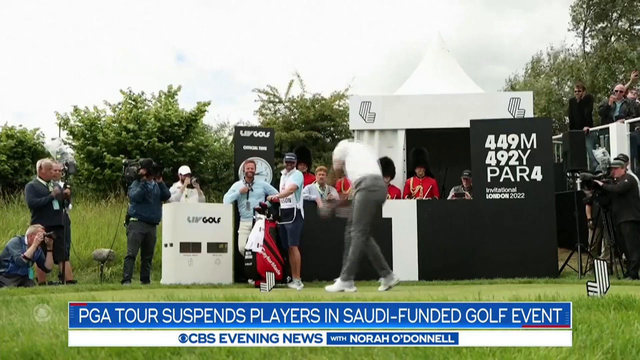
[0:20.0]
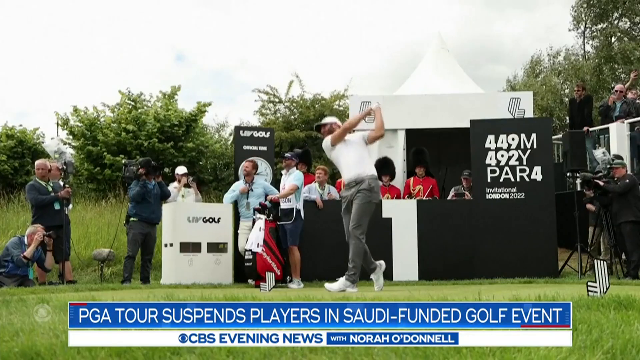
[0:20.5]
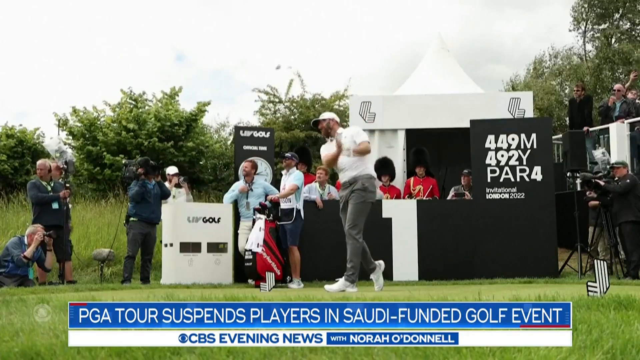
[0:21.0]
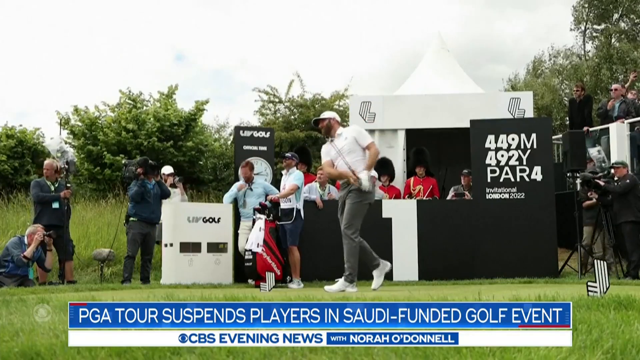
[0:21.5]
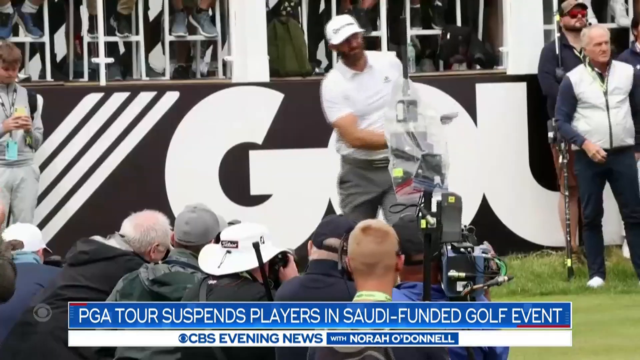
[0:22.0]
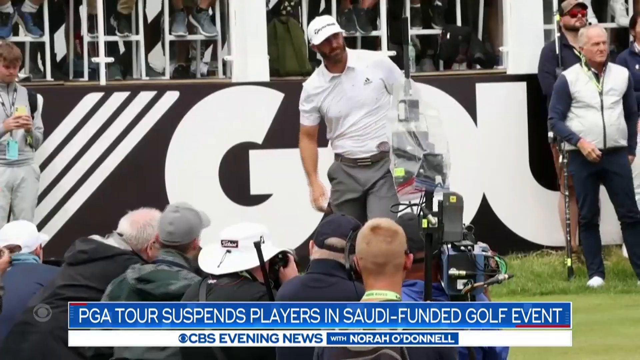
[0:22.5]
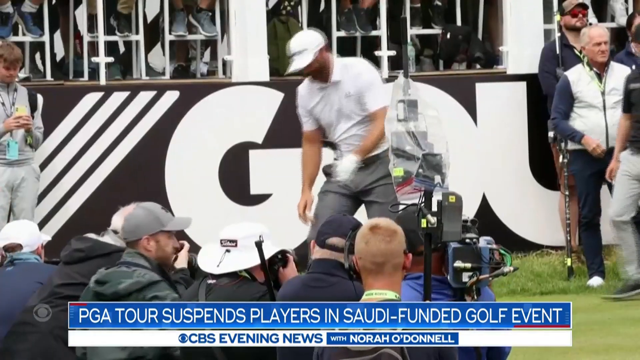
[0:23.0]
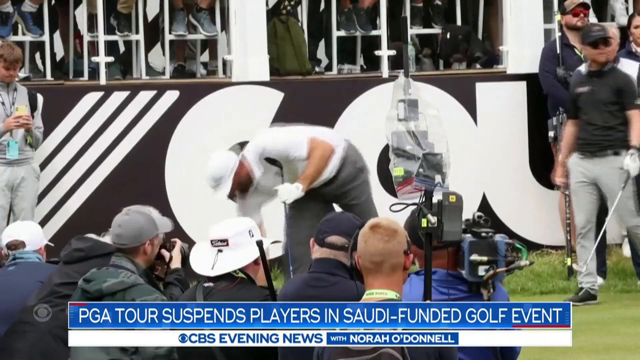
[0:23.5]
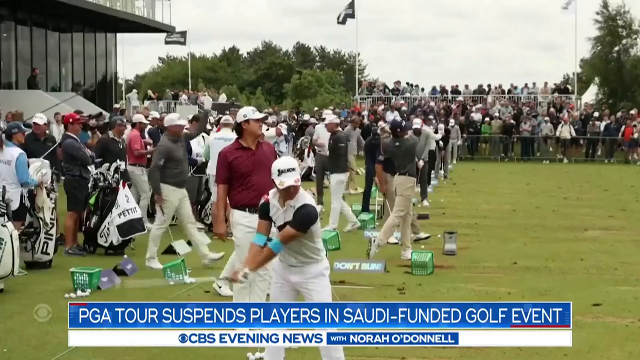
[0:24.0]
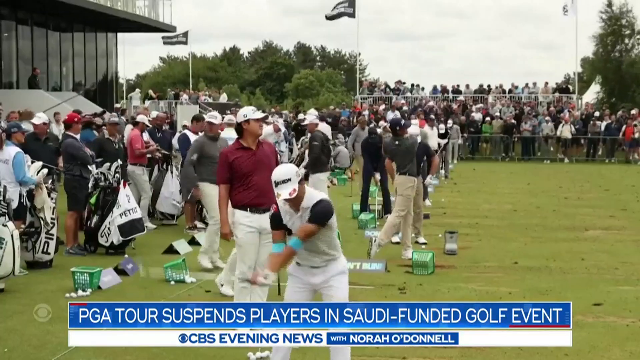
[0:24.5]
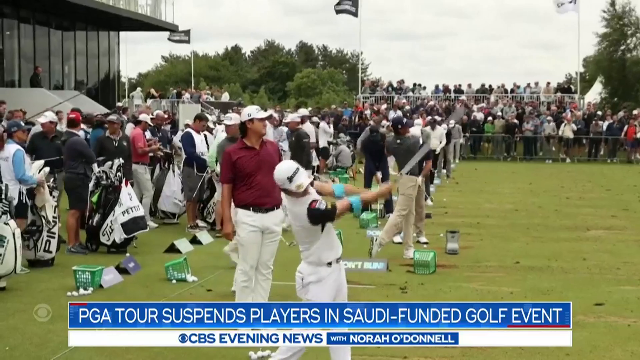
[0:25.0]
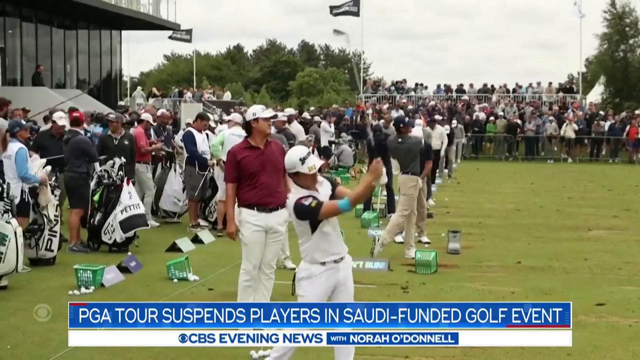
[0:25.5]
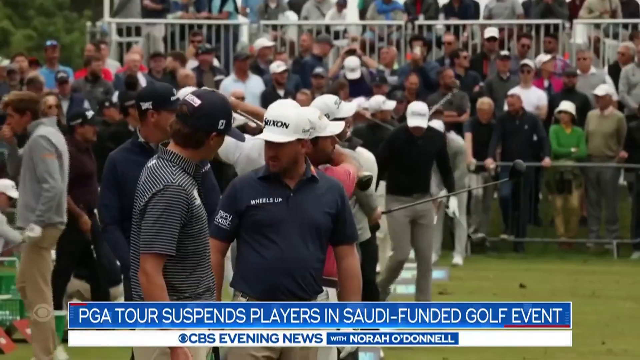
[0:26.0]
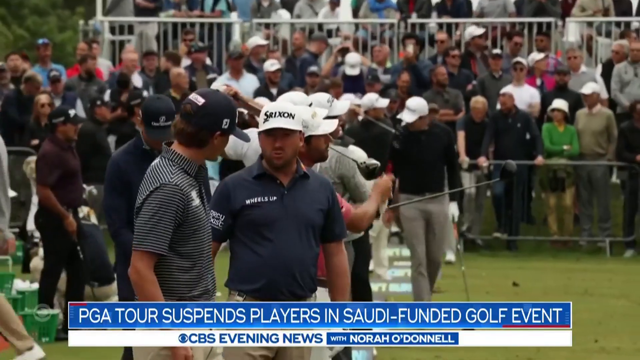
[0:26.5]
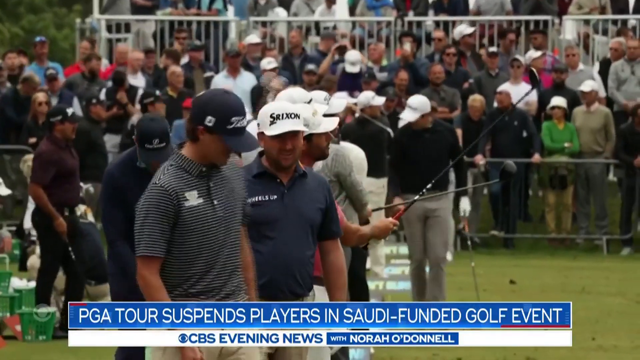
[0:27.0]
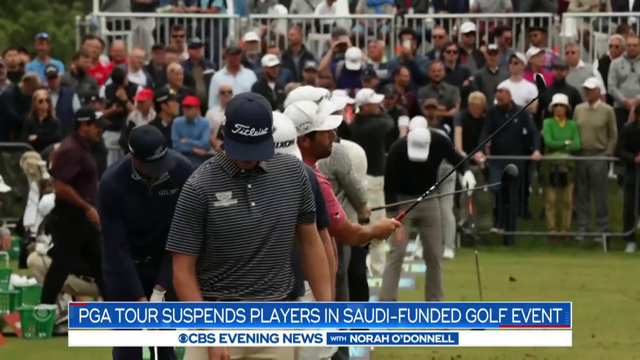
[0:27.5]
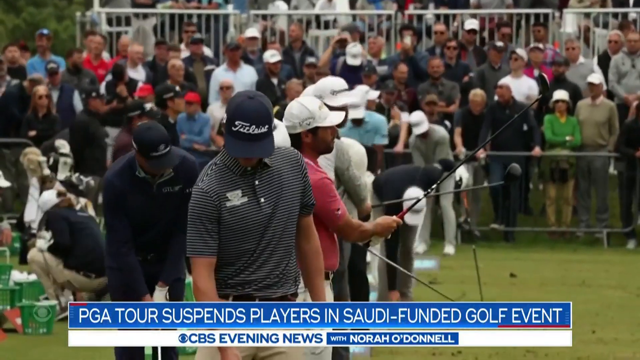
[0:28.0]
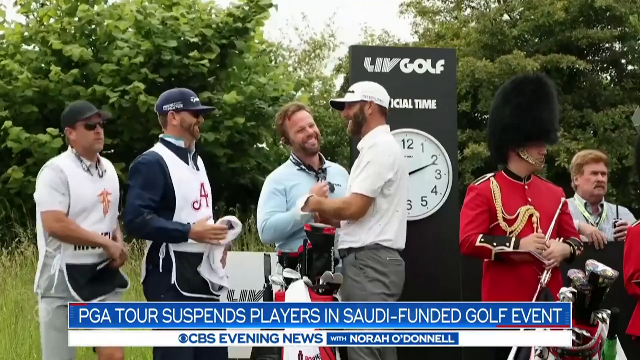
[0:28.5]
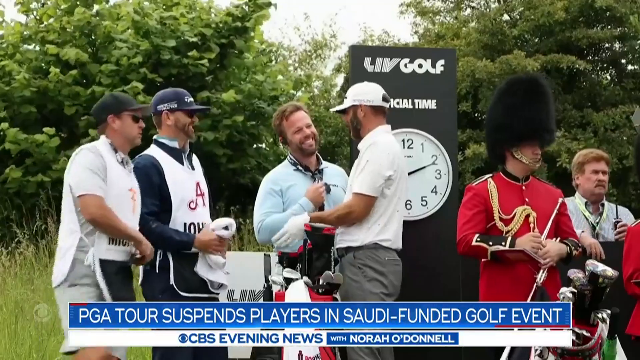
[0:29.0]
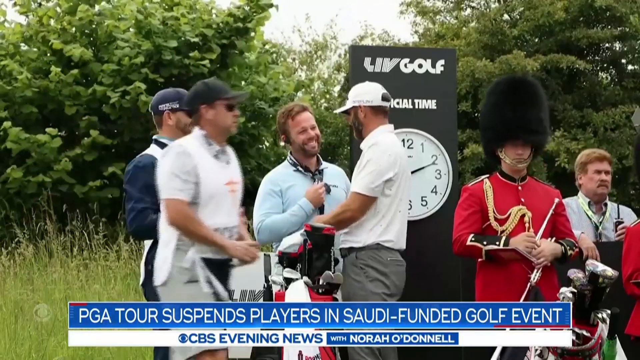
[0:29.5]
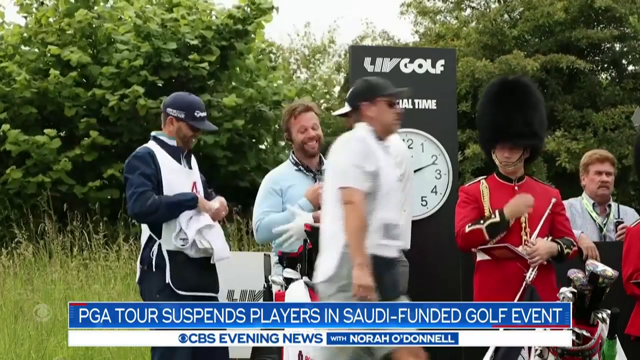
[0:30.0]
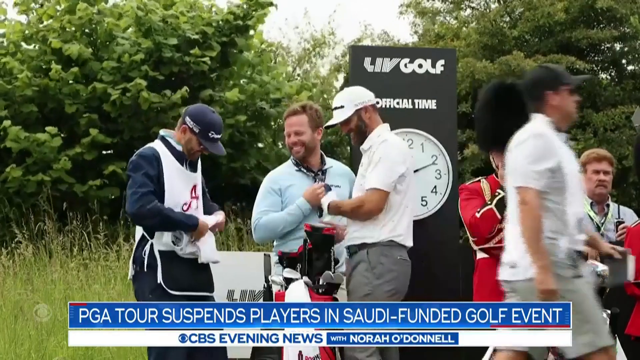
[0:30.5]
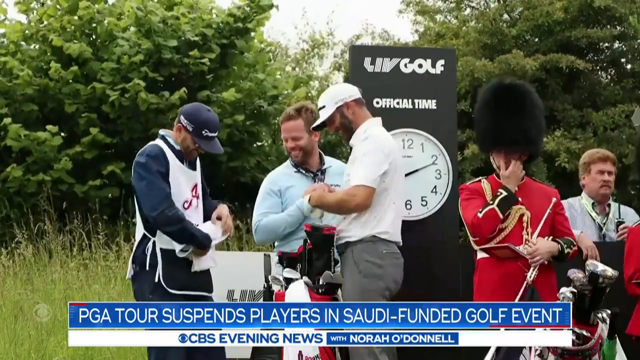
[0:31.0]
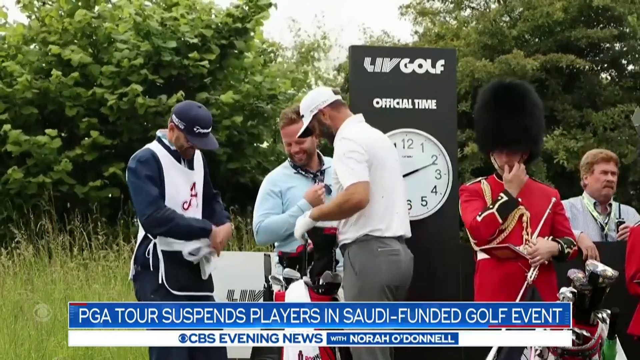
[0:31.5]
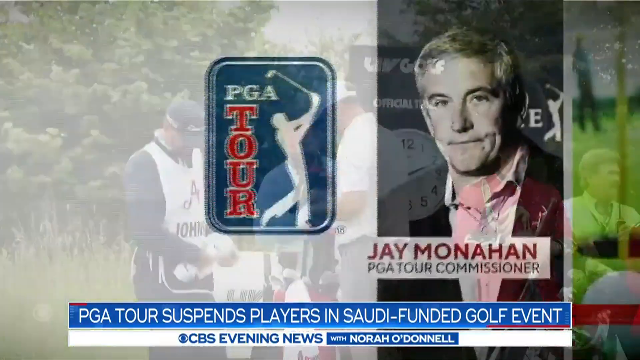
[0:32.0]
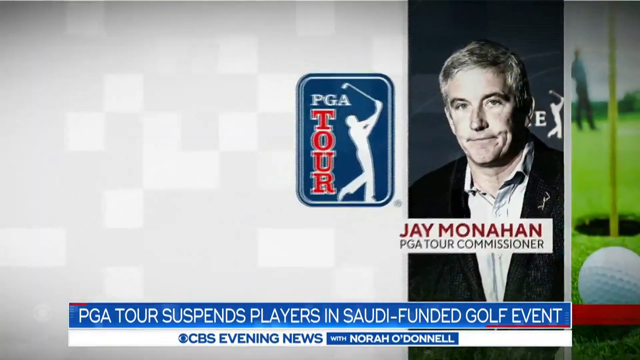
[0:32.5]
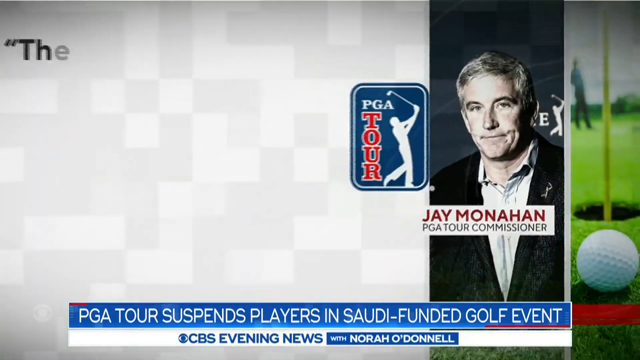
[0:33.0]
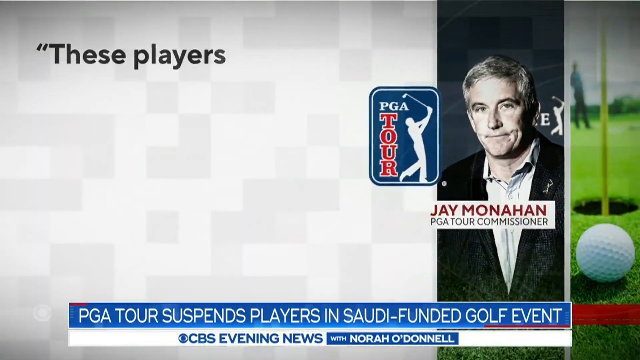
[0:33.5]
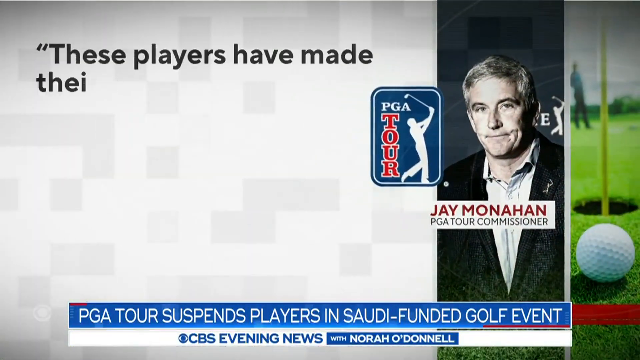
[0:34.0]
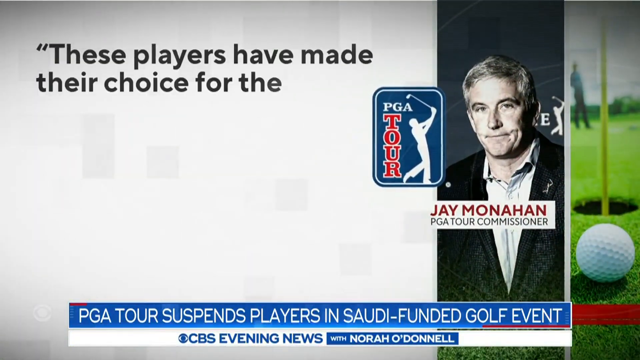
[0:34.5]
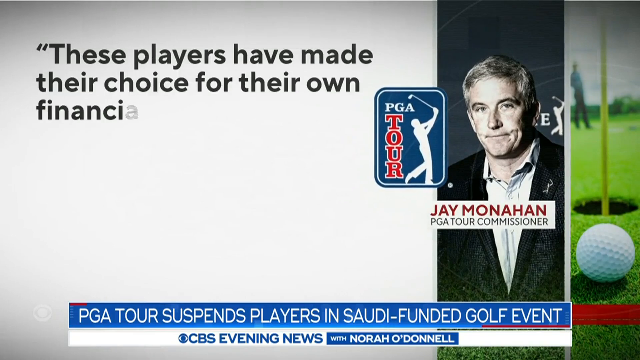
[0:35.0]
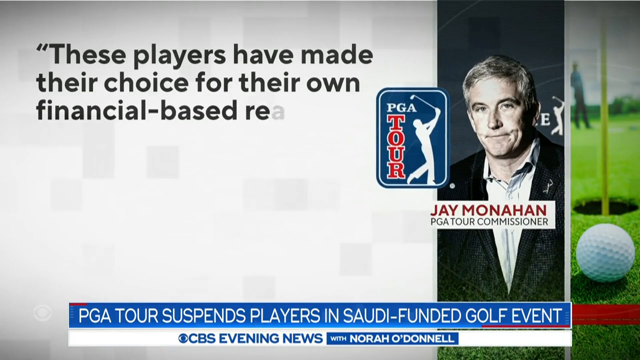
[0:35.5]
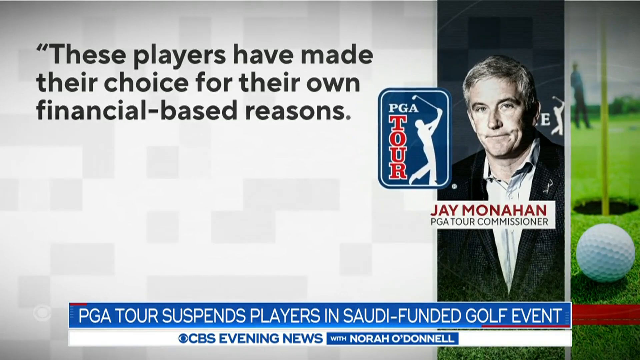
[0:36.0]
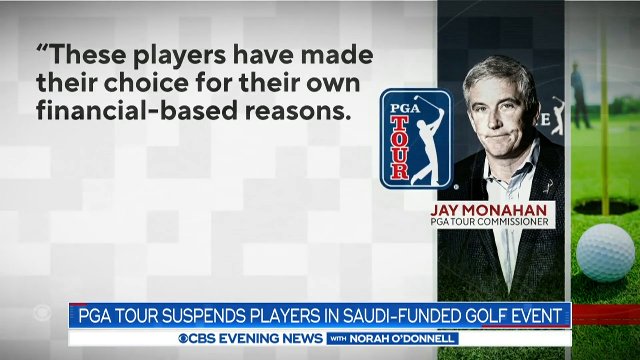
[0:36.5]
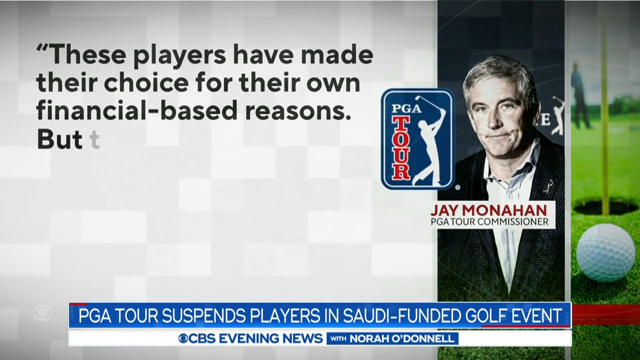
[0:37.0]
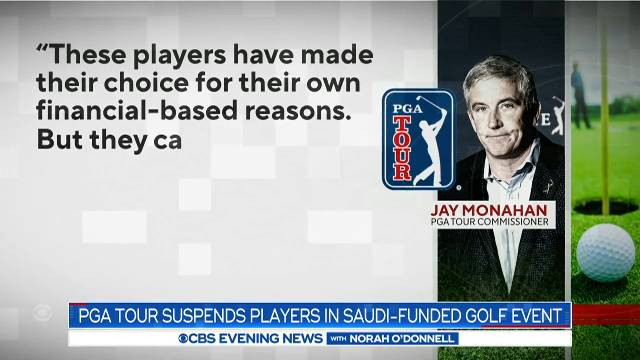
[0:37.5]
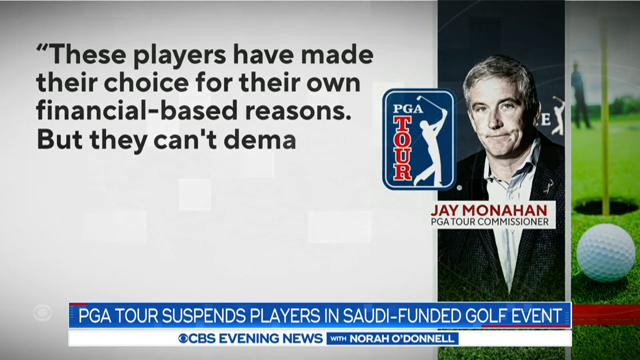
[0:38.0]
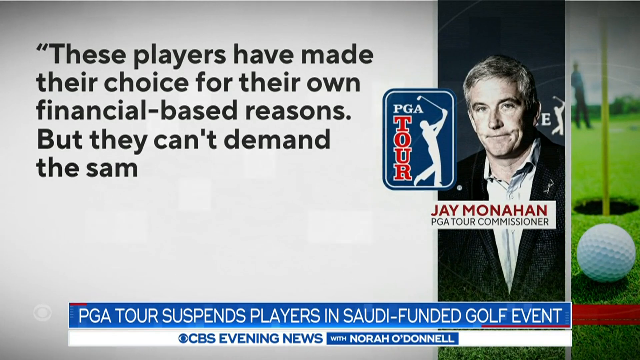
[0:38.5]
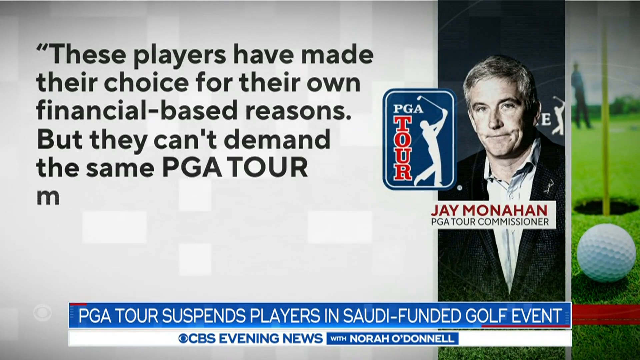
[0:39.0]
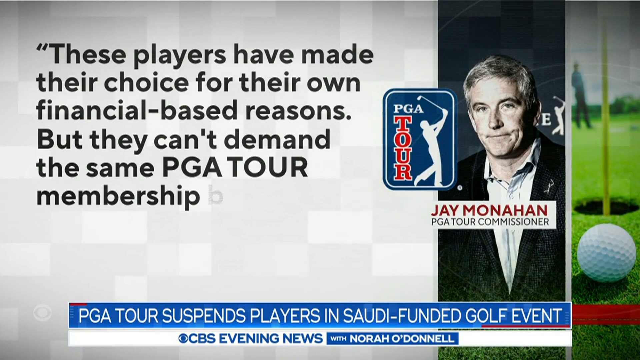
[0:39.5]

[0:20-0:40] The CBS News segment with Nora O'Donnell continues, with the story title displayed across the bottom in a blue banner reading "PGA TOUR SUSPENDS PLAYERS IN SAUDI FUNDED GOLF TOURNAMENT". Videos show players at a golfing tournament practicing swings at a crowded event with stands visible. A short clip of a marching band holding their instruments is also shown. A blank white screen slides in over the video with a description of the issue printed across it, a quote reading "These players have made their choice for their own financial-based reasons, but they can't demand the same PGA Tour membership". Next to the quote is an image of its author, Jay Monhan, PGA Tour Commissioner, in a dark suit jacket and a light-colored button-up shirt. The picture is off to the right of the quote and next to the PGA Tour logo.